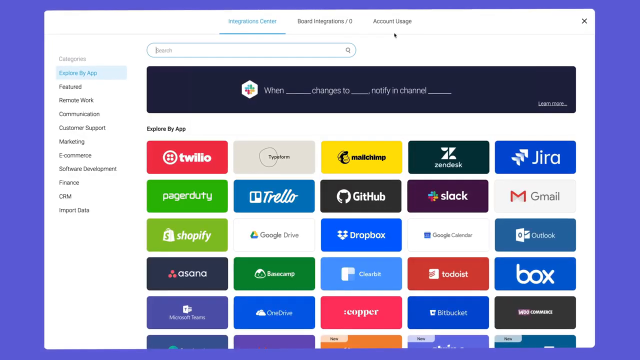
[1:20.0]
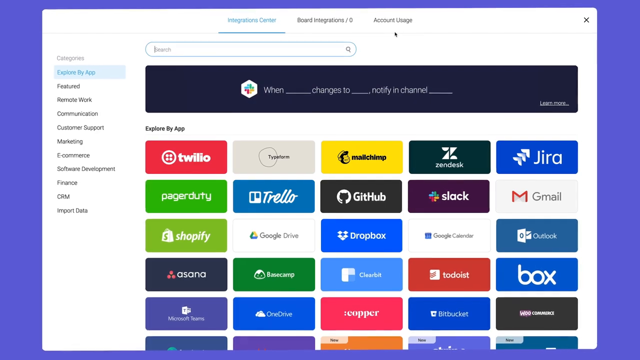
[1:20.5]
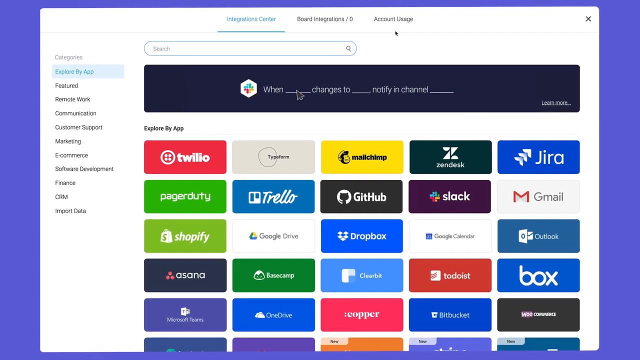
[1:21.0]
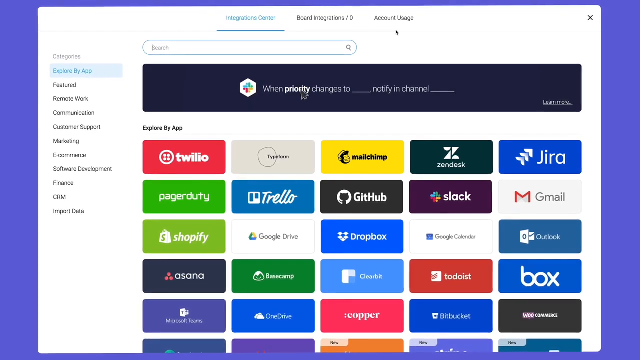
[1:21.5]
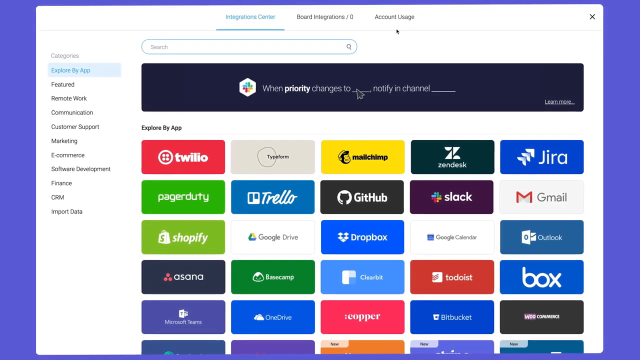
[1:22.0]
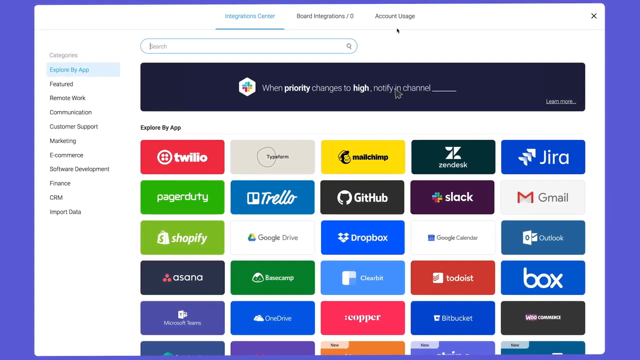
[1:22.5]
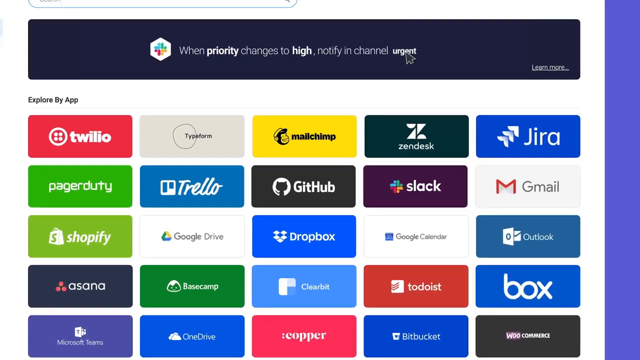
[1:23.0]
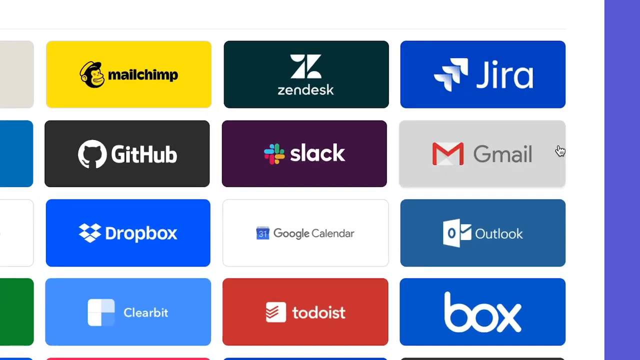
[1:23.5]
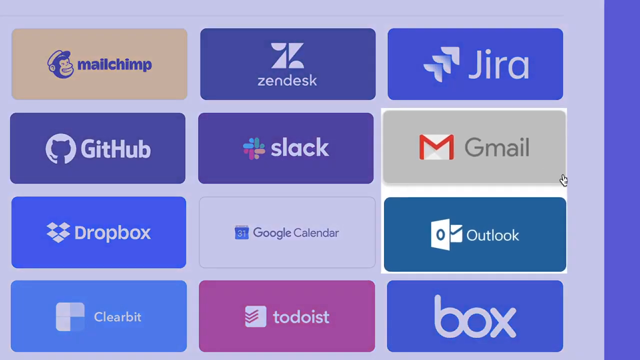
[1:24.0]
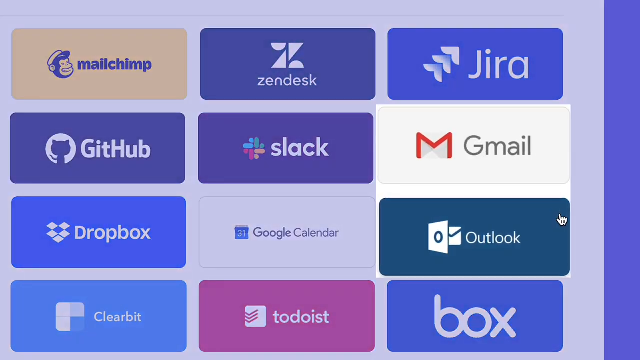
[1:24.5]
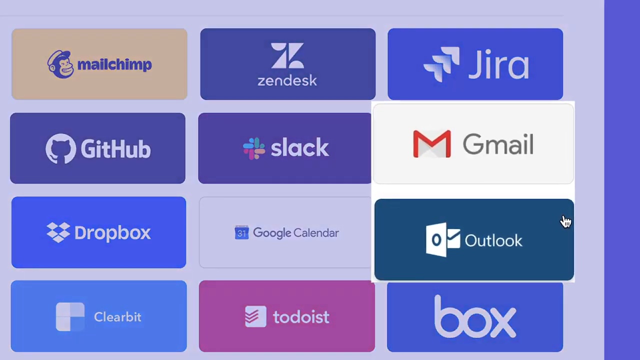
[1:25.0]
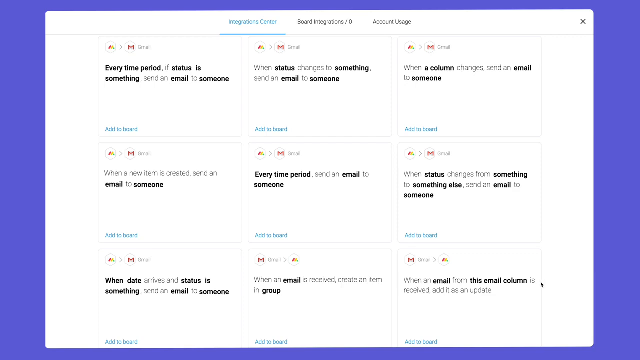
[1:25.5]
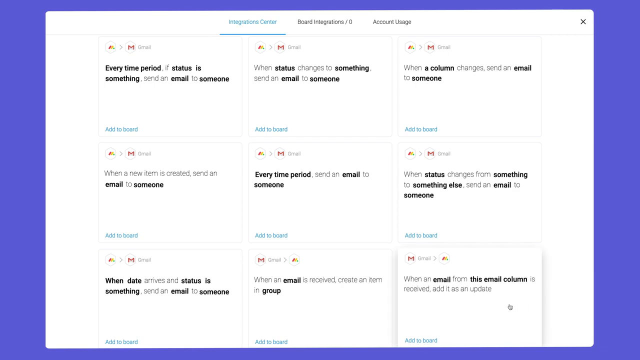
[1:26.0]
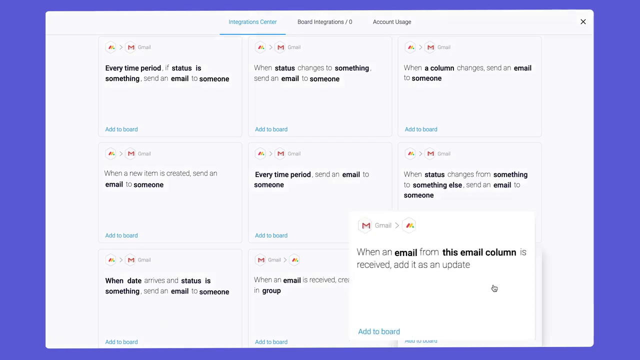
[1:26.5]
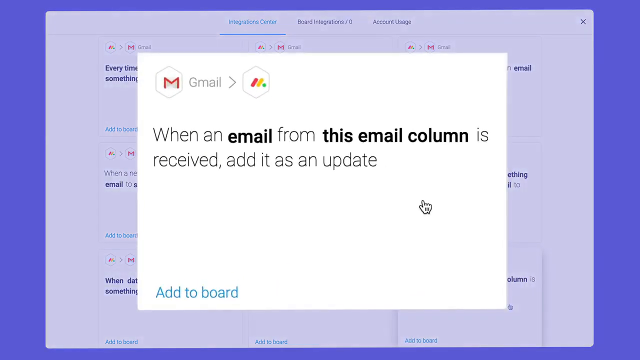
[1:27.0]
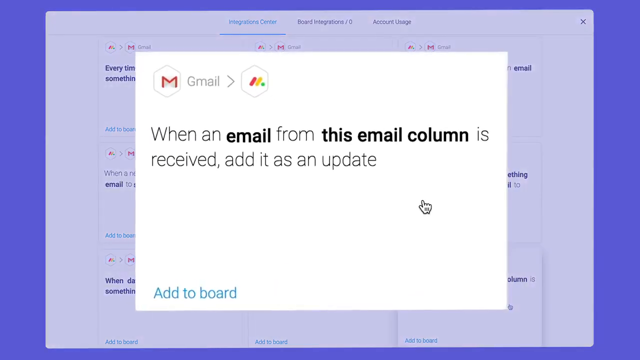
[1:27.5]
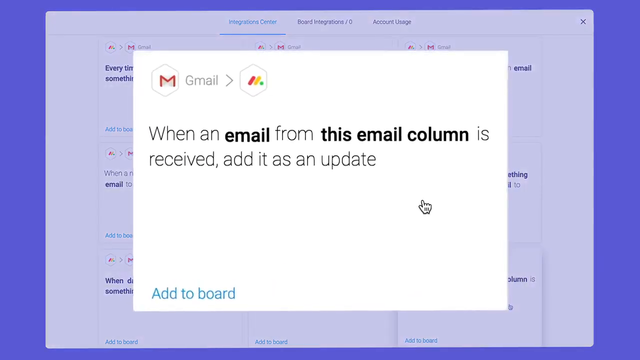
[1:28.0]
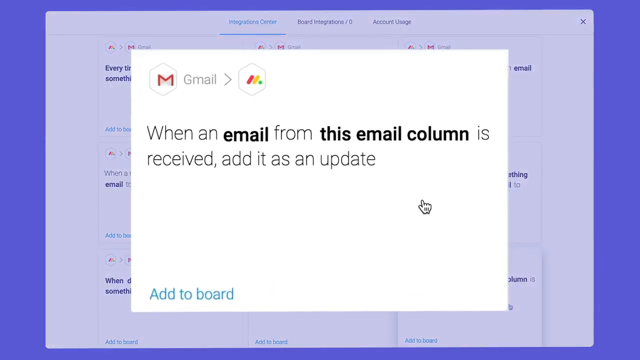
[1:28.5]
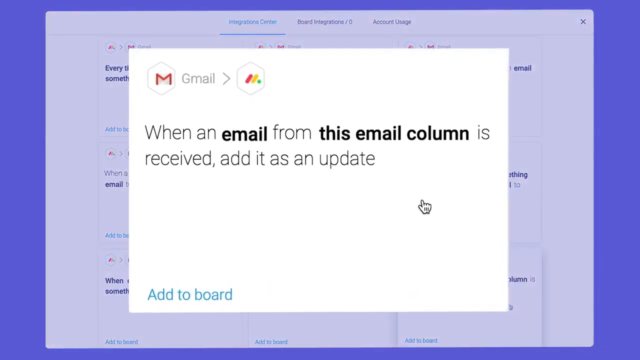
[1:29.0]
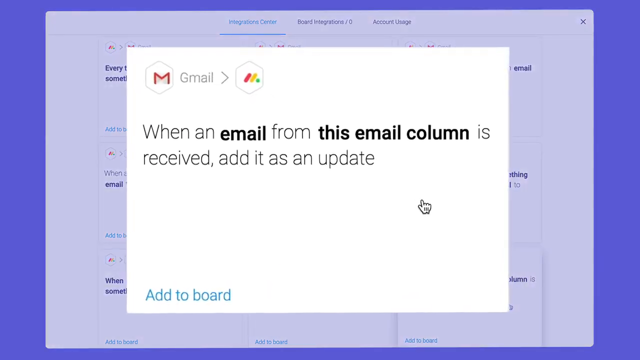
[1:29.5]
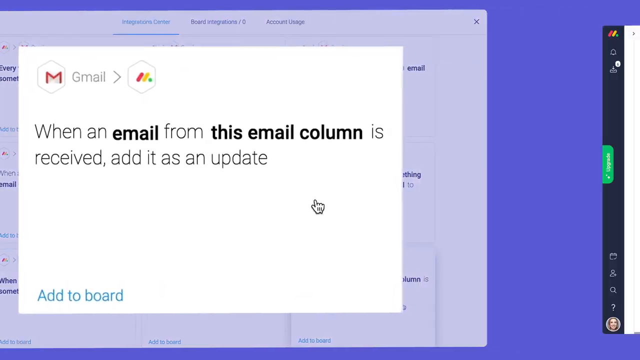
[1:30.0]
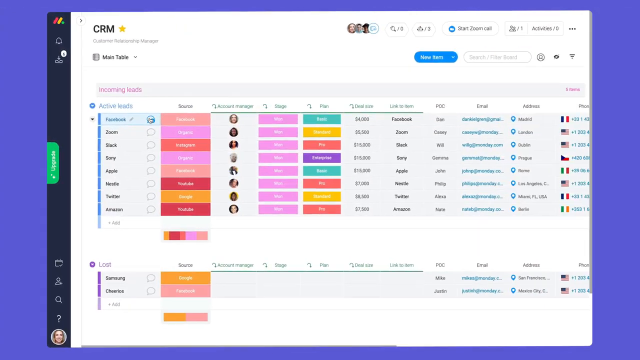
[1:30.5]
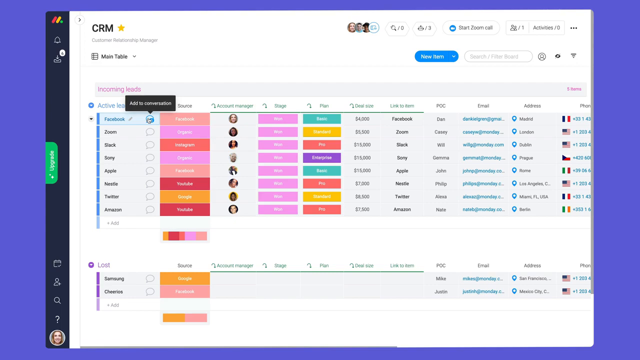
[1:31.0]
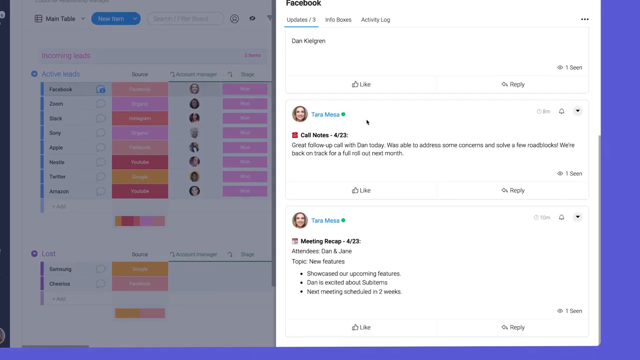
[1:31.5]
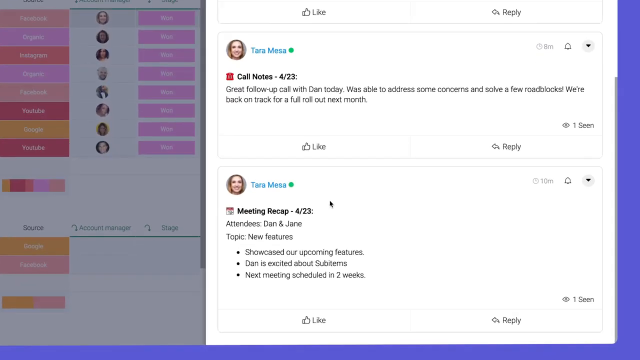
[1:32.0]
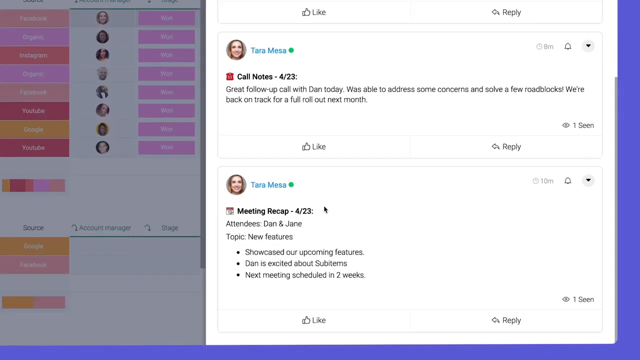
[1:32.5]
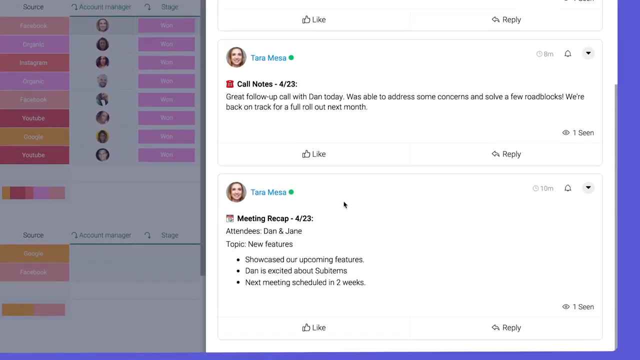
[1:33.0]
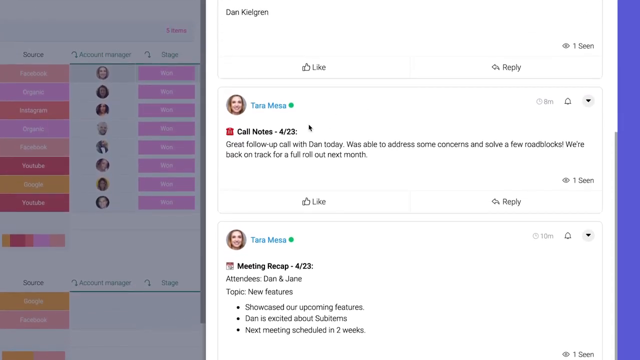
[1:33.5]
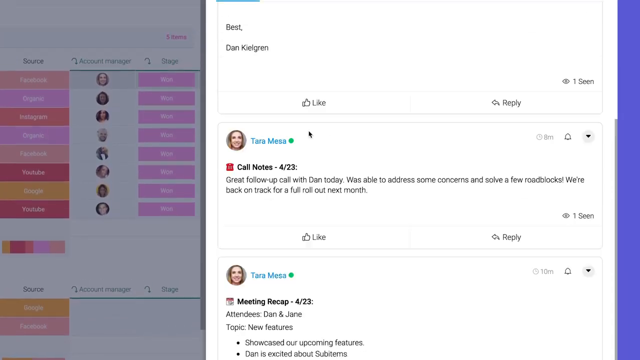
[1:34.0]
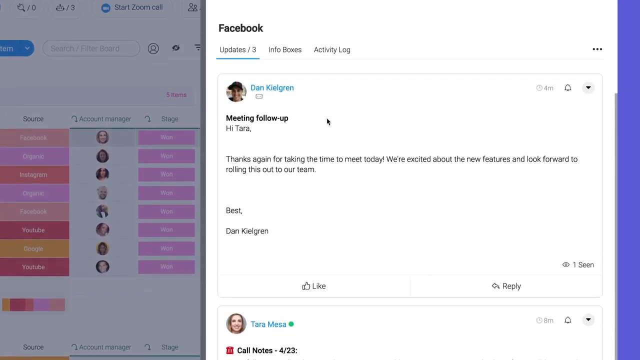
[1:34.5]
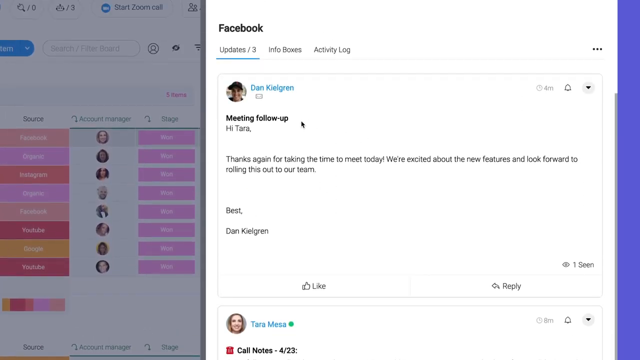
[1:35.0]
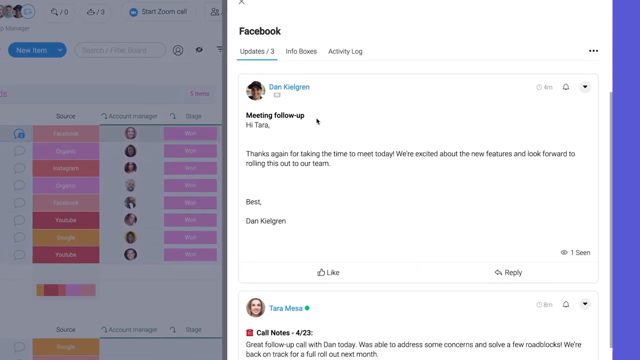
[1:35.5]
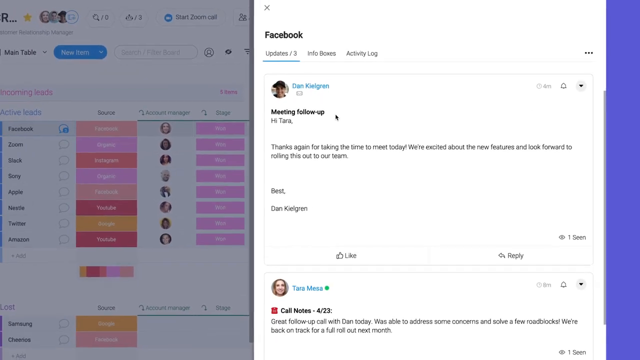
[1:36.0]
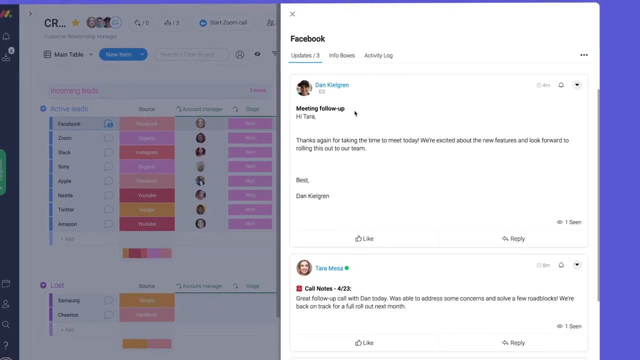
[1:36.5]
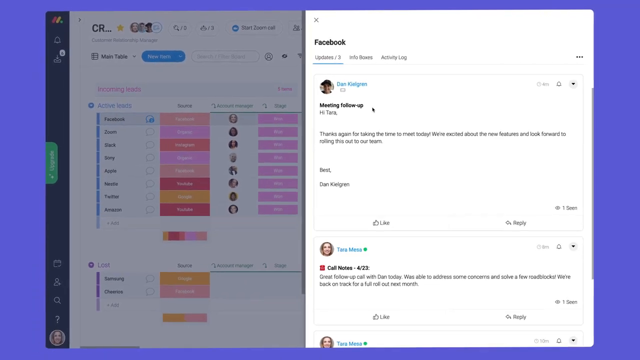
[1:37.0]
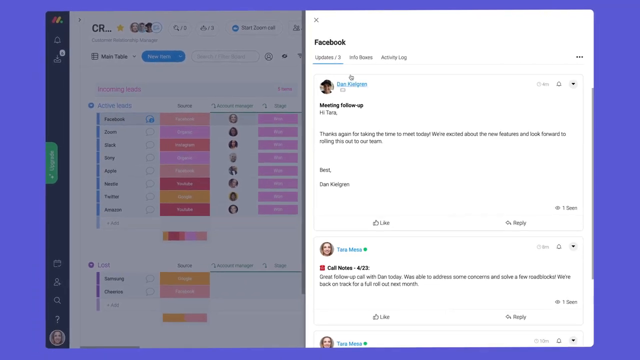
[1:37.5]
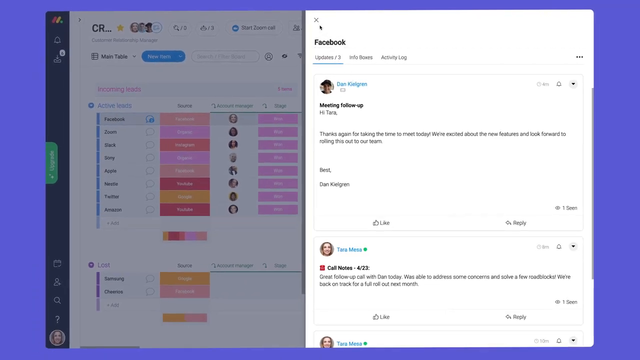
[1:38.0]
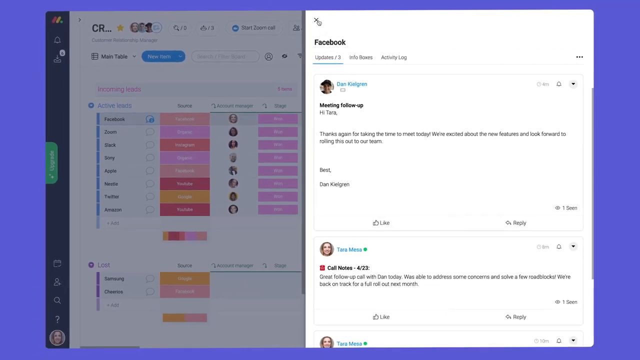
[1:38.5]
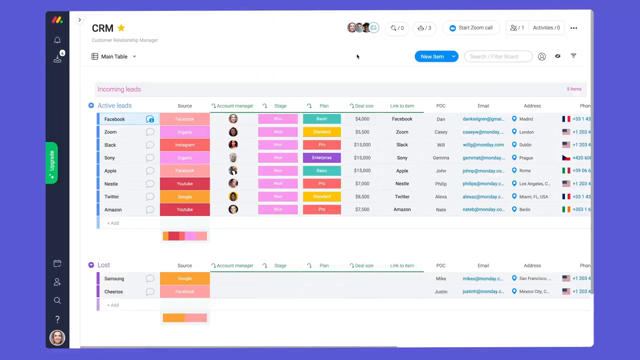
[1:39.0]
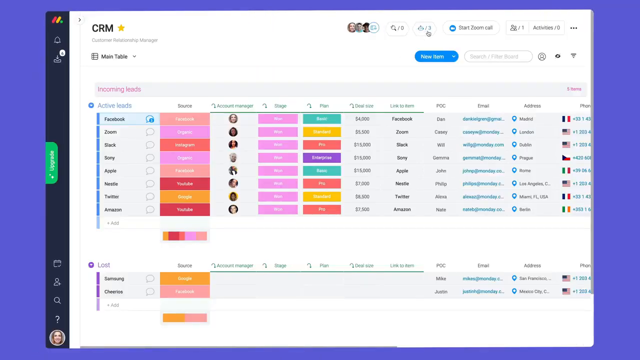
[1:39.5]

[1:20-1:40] The cursor clicks on the word "hi," then on Gmail and Outlook. A new screen pops up with a pop-up from Gmail that says "when an email from this email column is received, add it as an update," and on the bottom left-hand side of this block it says "add to board." The cursor hand is sitting on the pop-up. The screen slides to a different computer screen that appears to show a social media page with different comments or posts, with "Facebook" at the top. The cursor scrolls down to a profile from Terra Mesa that says "meeting recap from 423," followed by three bullet points. The cursor then goes up to a couple of other updates on Facebook, and the camera view slowly pulls back. The cursor X's out of that pop-up and clicks on another one.